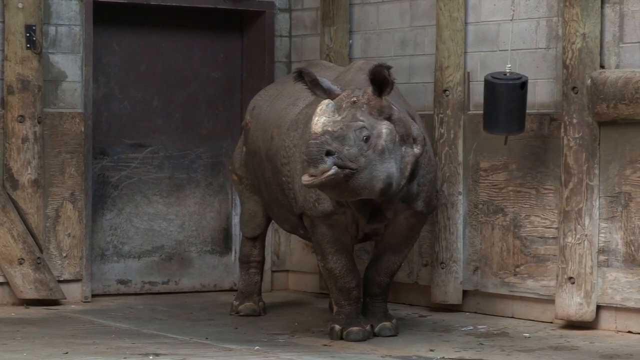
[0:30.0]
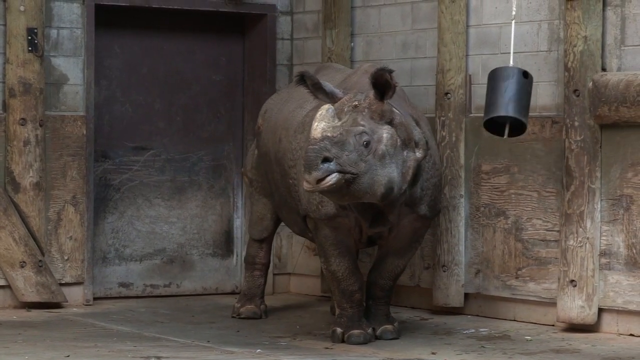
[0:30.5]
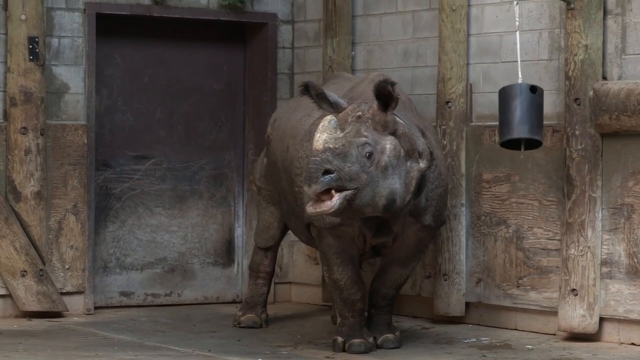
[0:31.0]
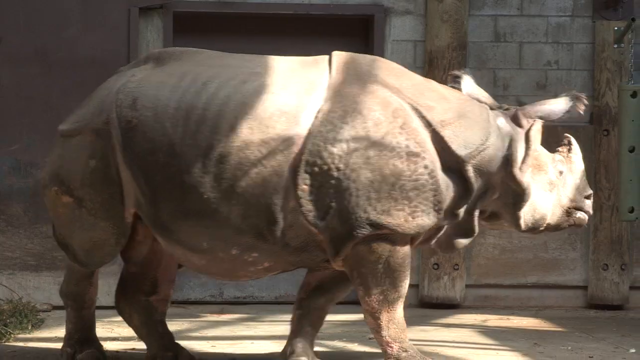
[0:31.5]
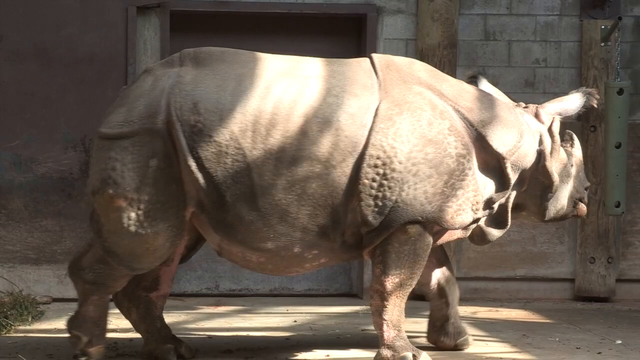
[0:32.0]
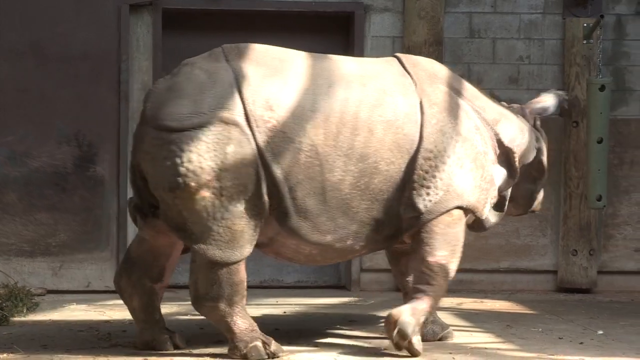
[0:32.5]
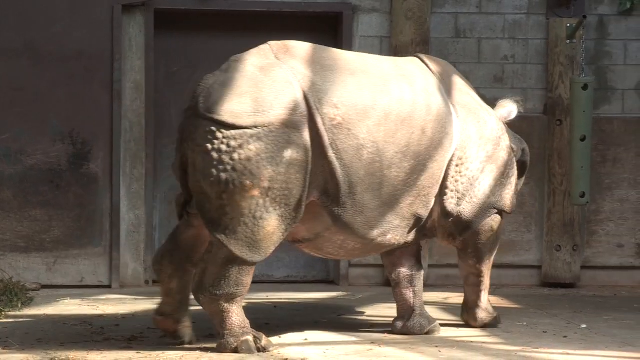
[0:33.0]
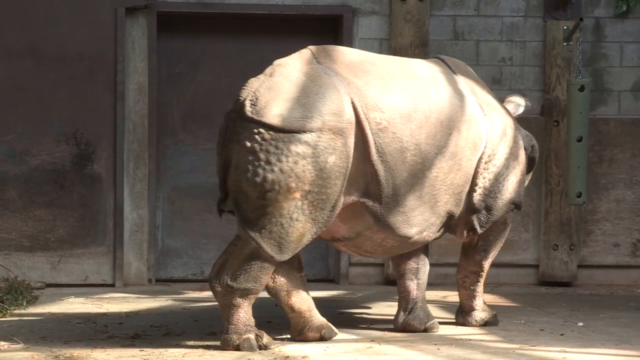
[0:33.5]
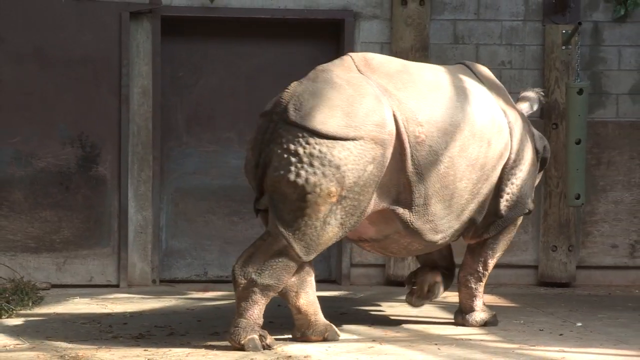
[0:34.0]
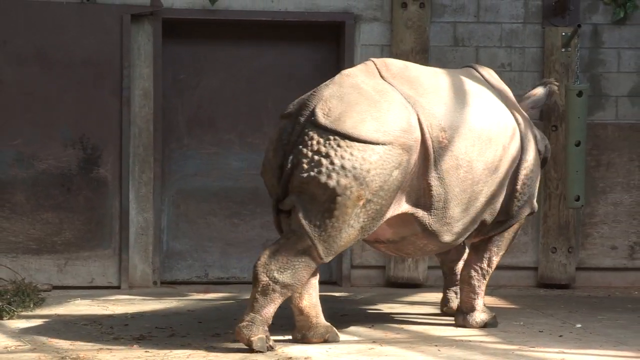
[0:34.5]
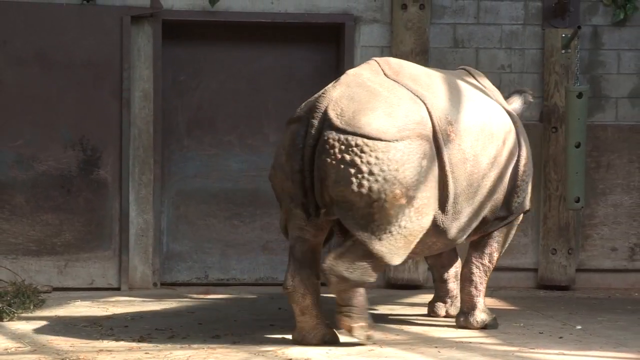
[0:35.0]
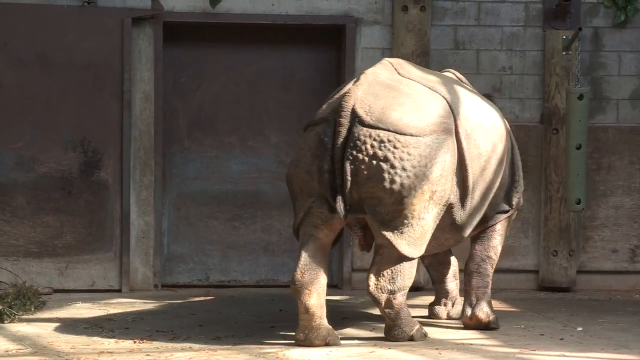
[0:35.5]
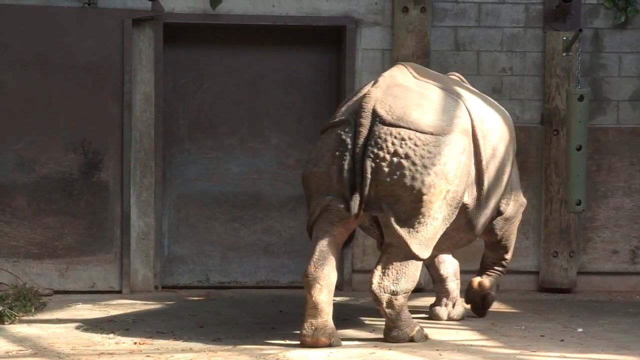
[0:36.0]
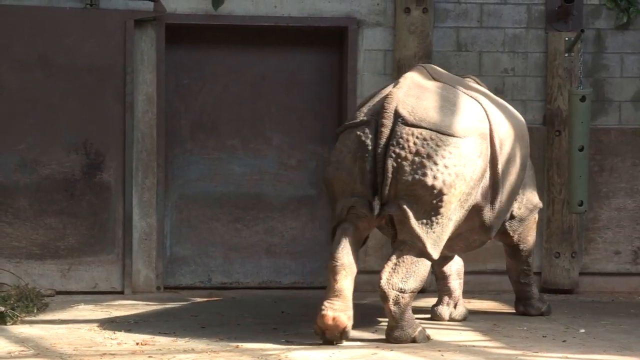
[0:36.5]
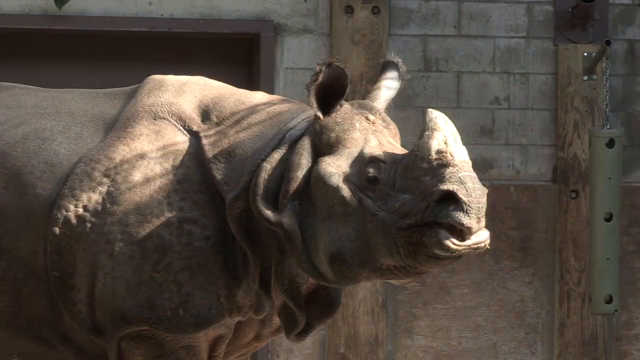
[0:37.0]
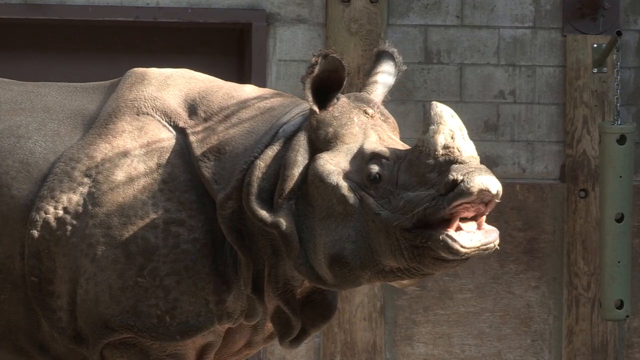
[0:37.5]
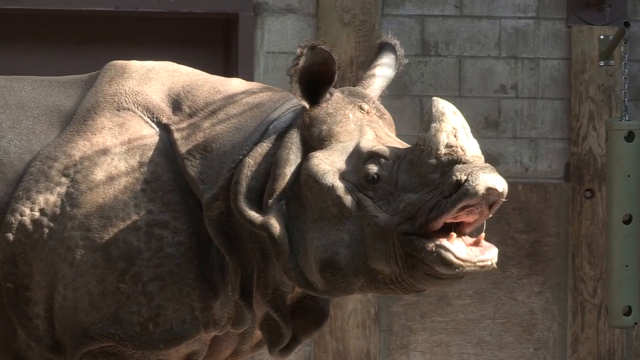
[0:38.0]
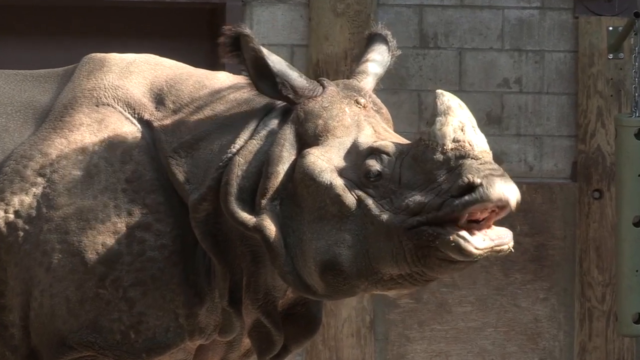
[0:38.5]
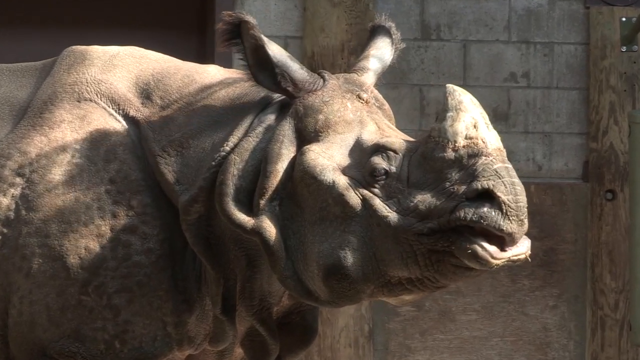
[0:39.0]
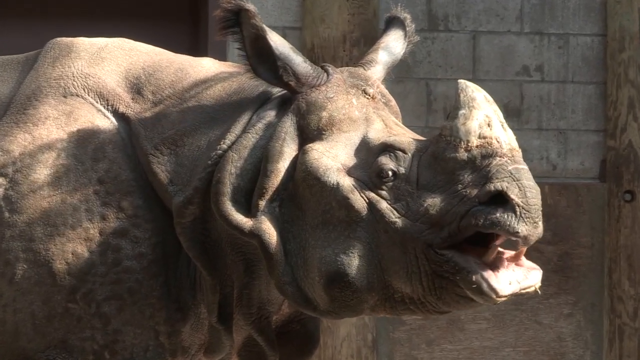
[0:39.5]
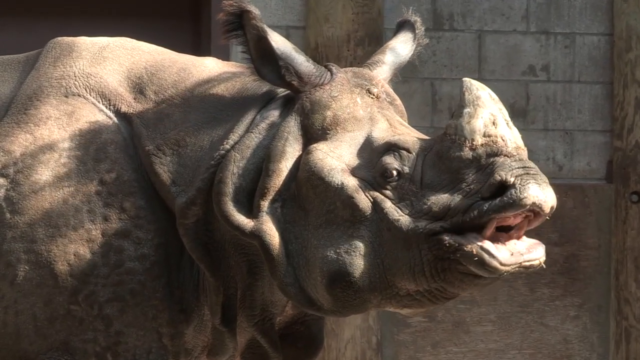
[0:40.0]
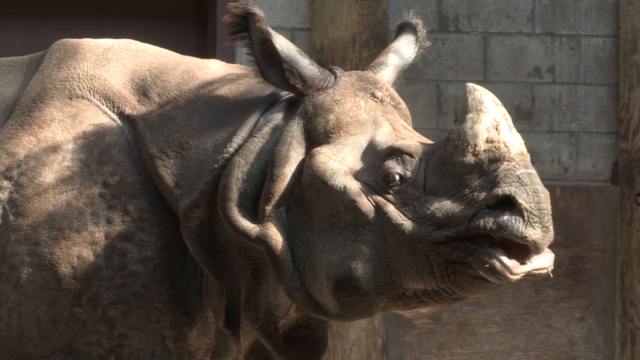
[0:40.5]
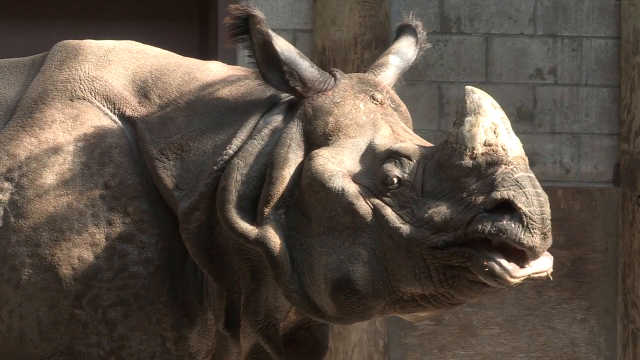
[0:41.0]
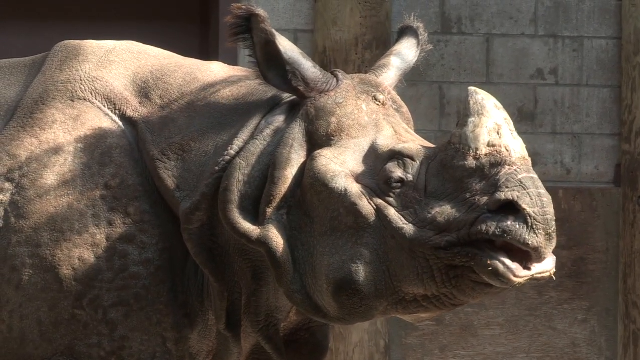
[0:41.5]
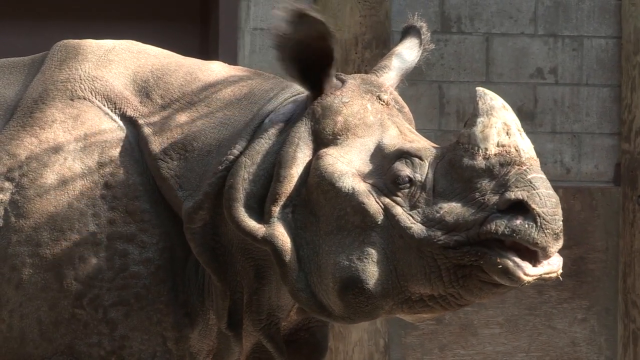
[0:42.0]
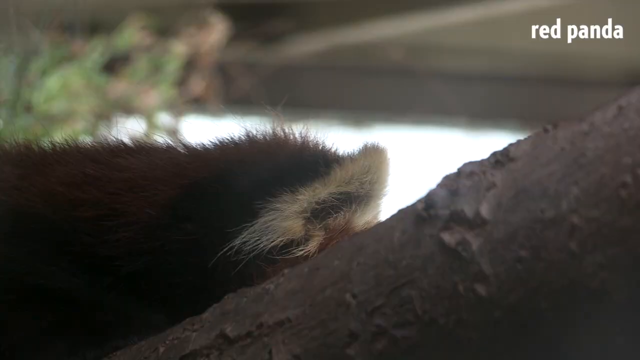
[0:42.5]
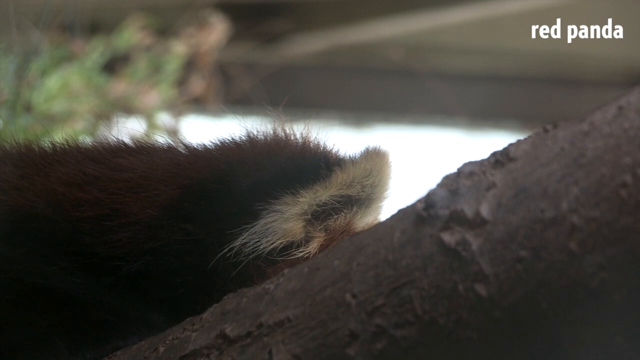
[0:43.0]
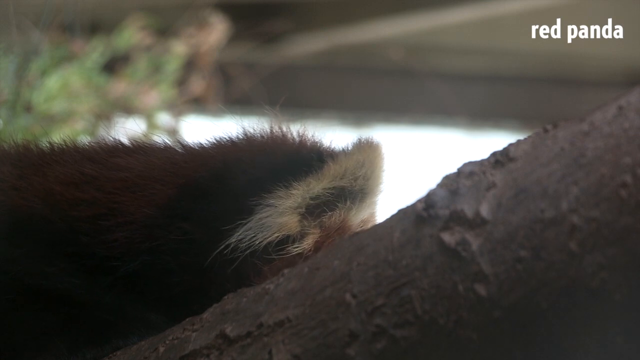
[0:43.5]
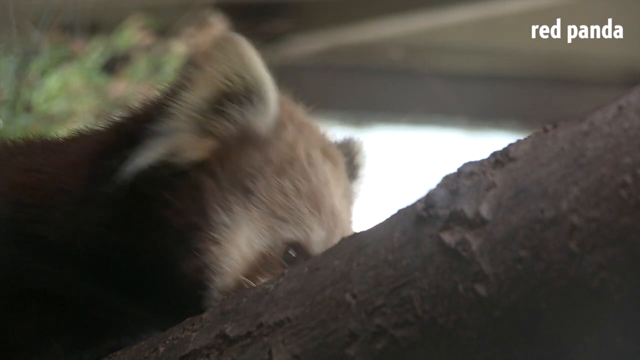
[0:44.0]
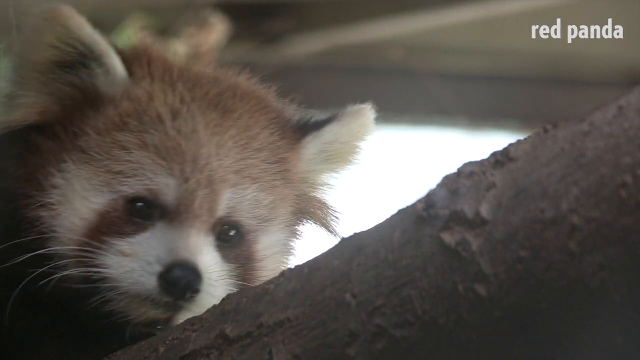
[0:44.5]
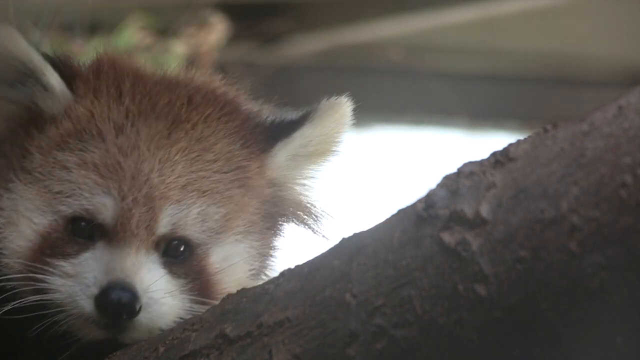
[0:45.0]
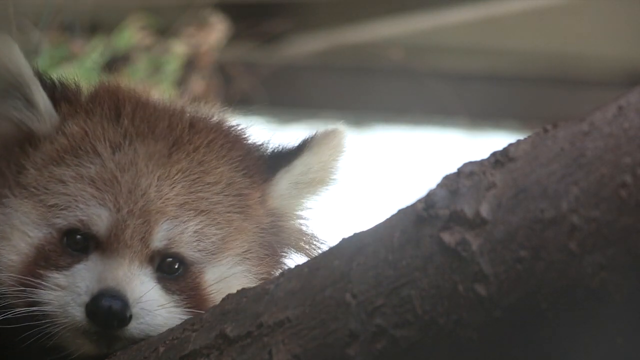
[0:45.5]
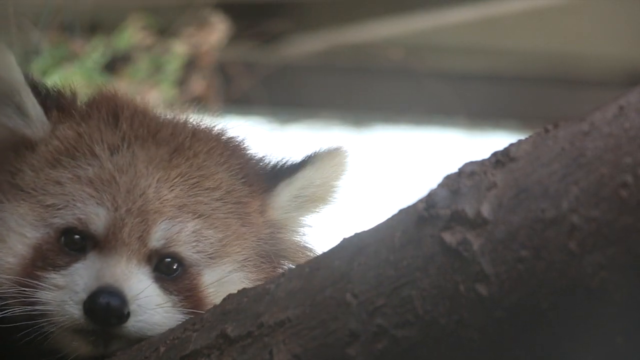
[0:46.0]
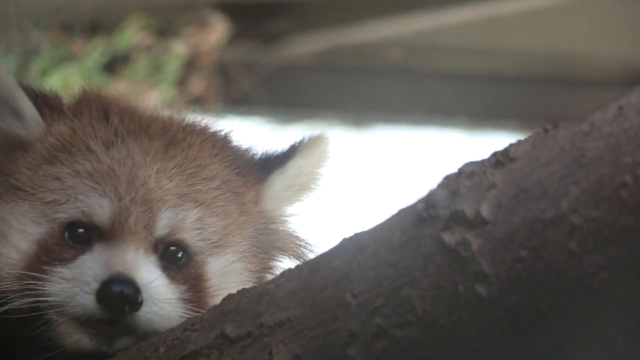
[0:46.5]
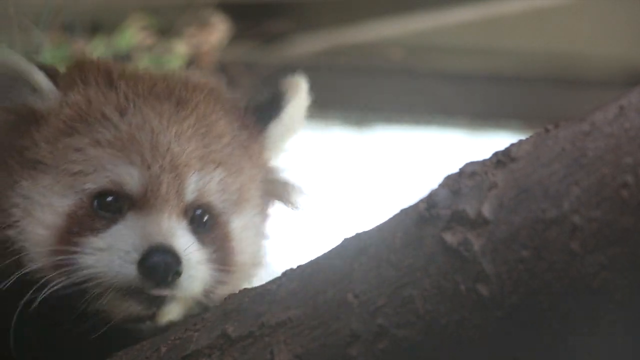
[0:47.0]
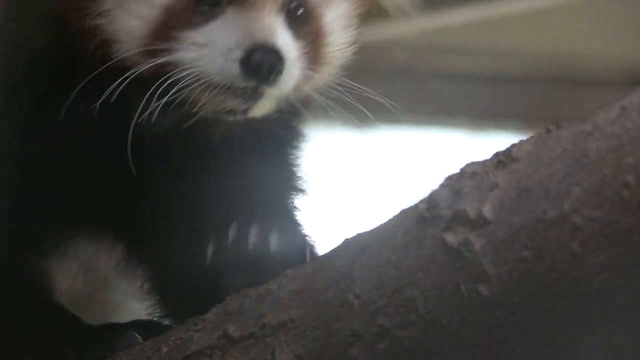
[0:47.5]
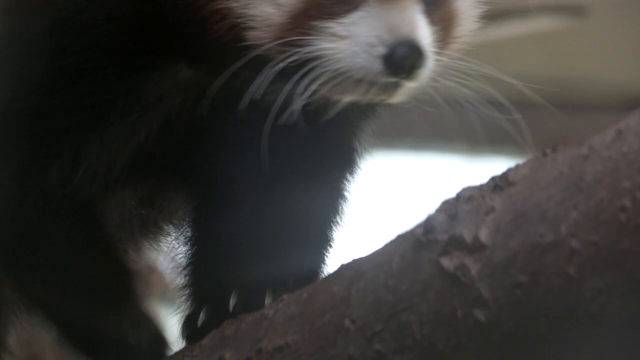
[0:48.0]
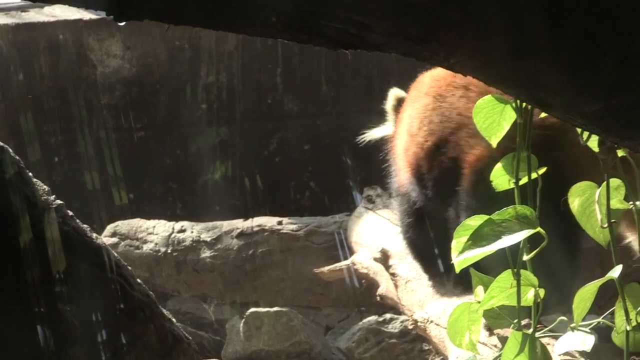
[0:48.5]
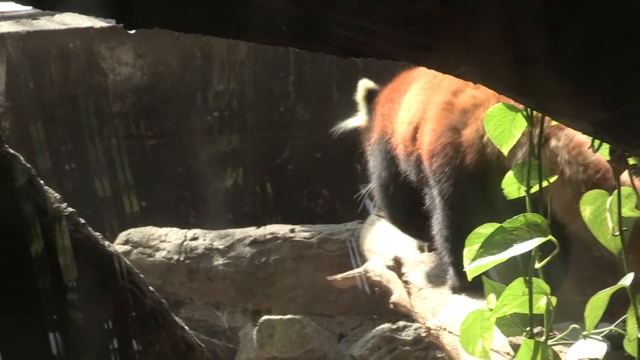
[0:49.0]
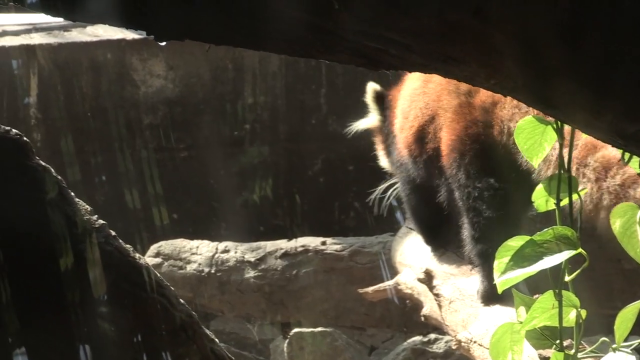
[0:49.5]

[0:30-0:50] The large Indian rhino is shown in a zoo-like setting, opening its mouth and showing its teeth, maybe chewing some sort of food. It walks around, and a close-up of its face shows it seemingly chewing or opening its mouth. The video then transitions to a red panda sitting on a kind of wooden log, then to the back side of the red panda as it walks along the log in the Toronto Zoo environment. No people are shown, only the animals.